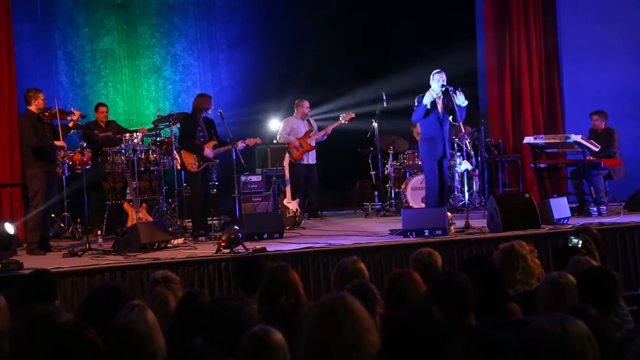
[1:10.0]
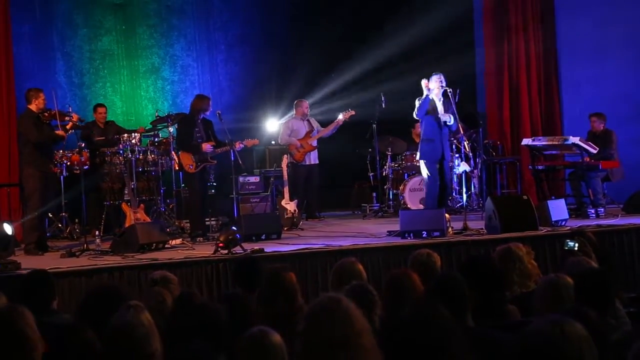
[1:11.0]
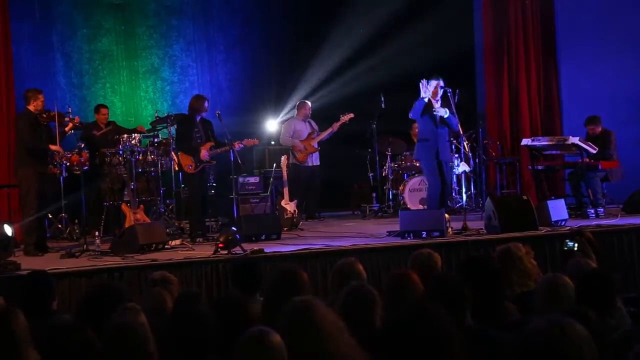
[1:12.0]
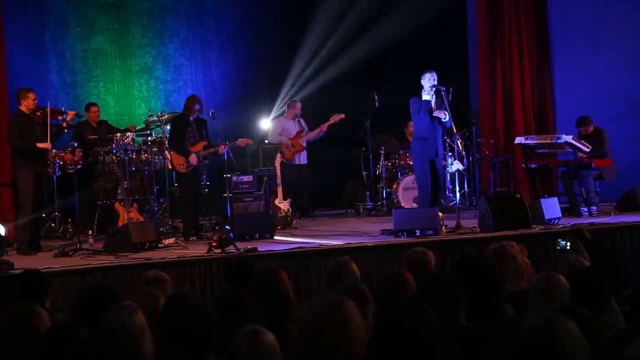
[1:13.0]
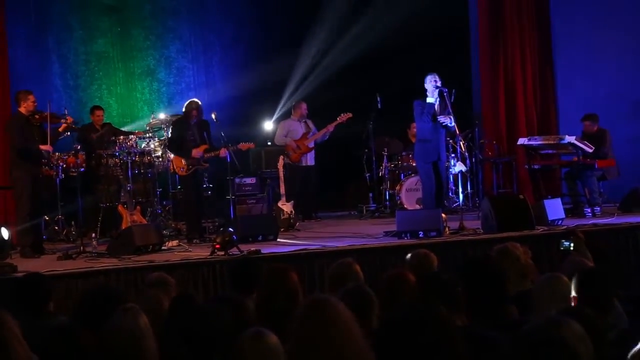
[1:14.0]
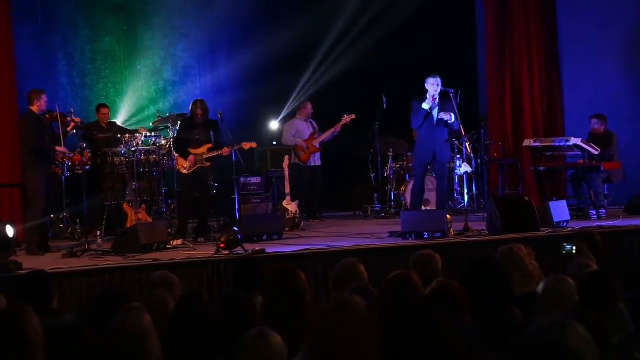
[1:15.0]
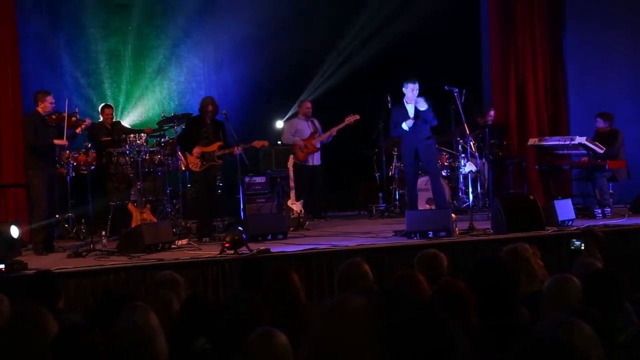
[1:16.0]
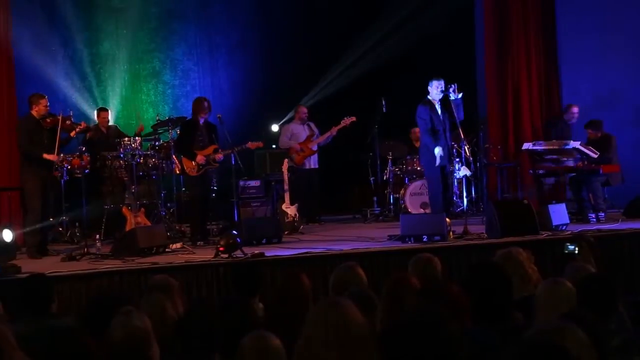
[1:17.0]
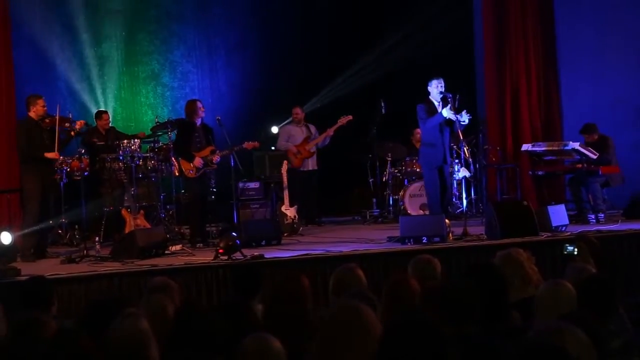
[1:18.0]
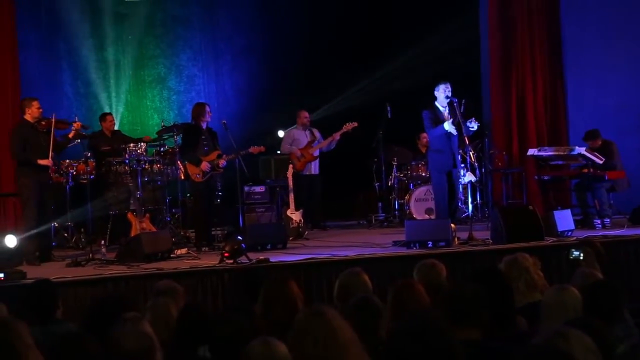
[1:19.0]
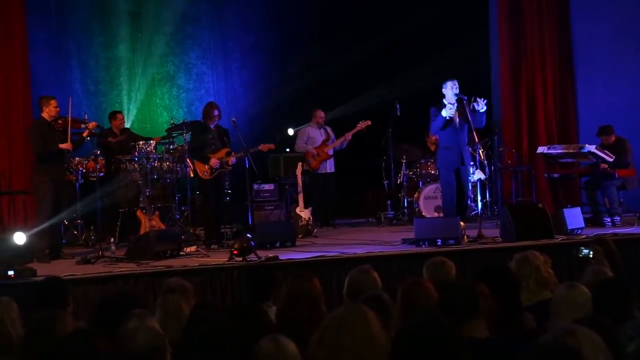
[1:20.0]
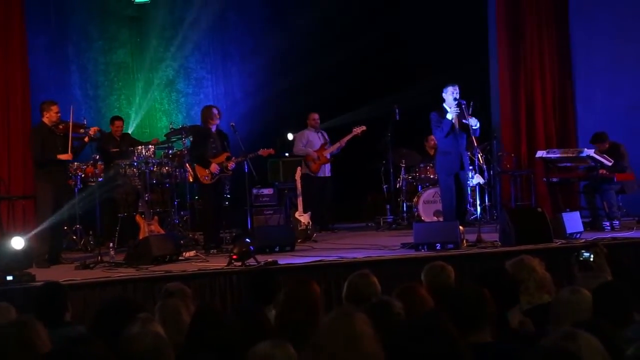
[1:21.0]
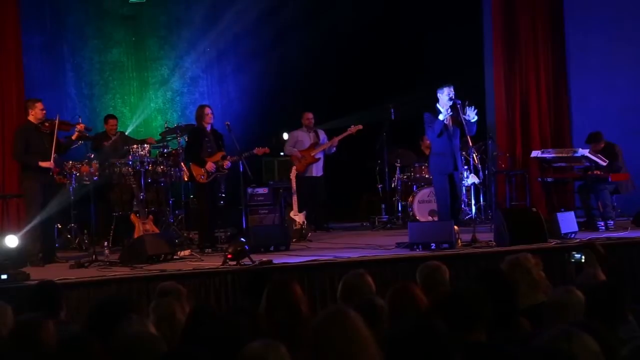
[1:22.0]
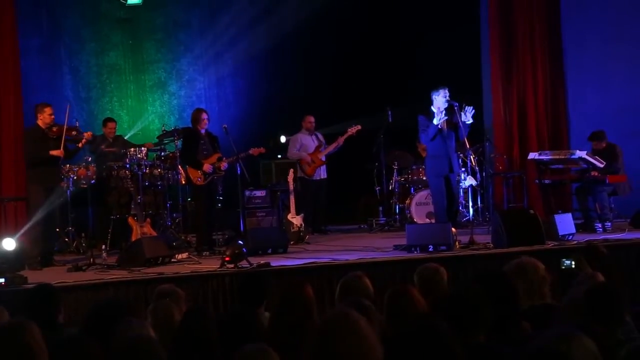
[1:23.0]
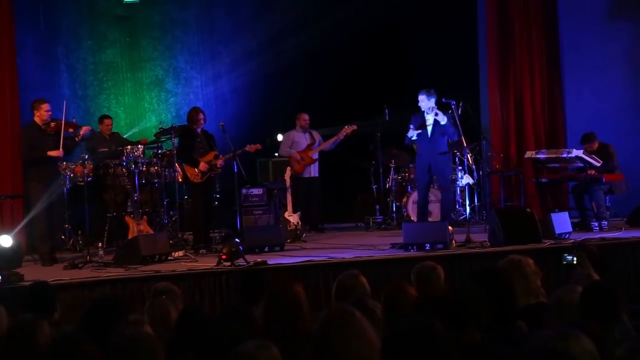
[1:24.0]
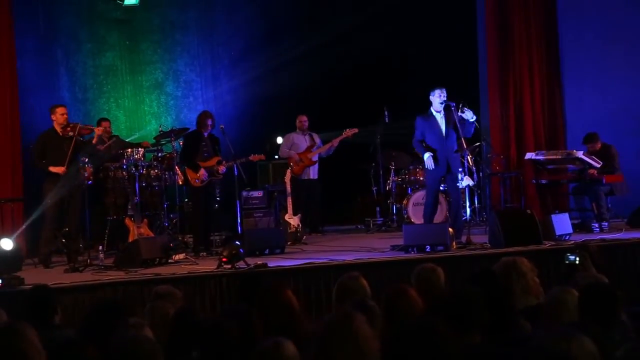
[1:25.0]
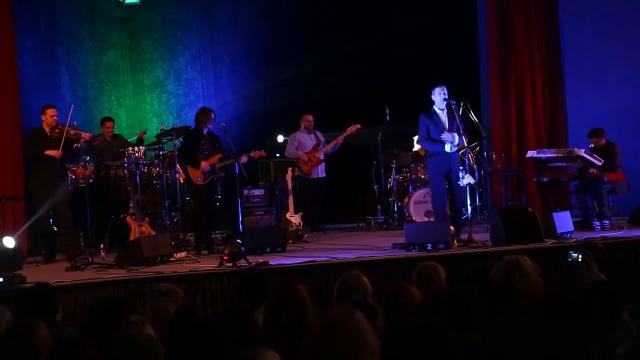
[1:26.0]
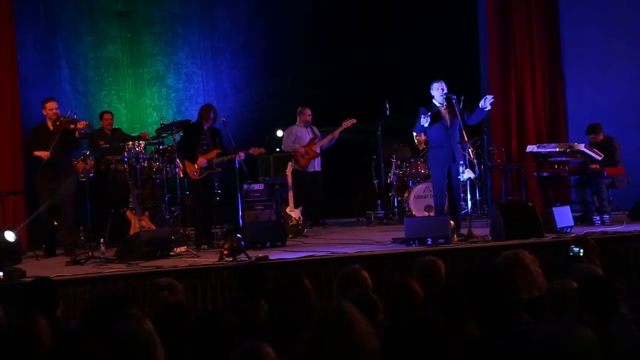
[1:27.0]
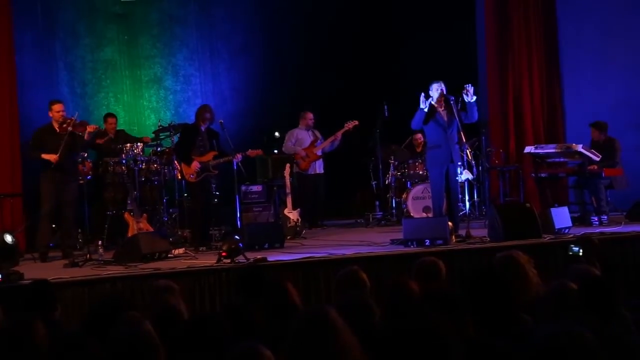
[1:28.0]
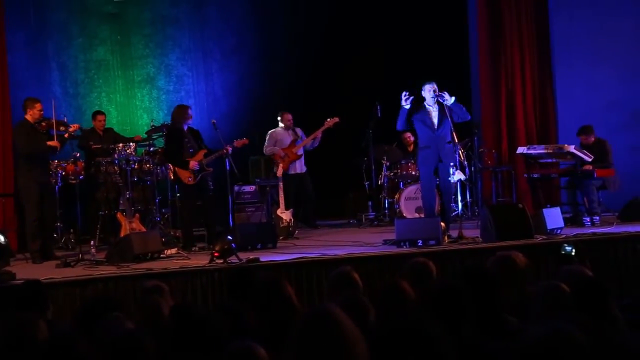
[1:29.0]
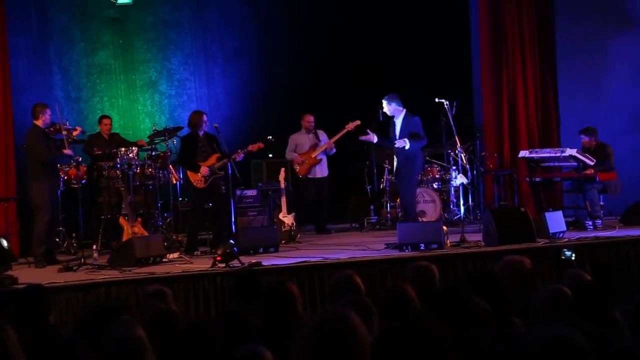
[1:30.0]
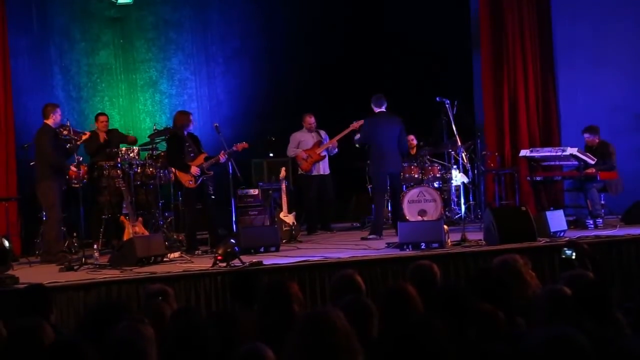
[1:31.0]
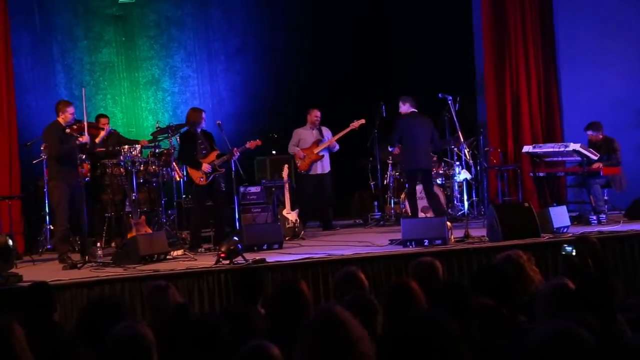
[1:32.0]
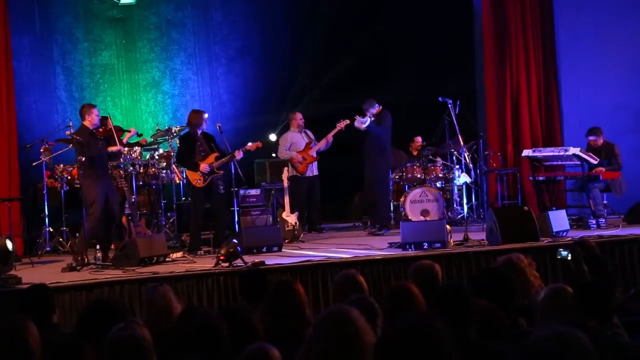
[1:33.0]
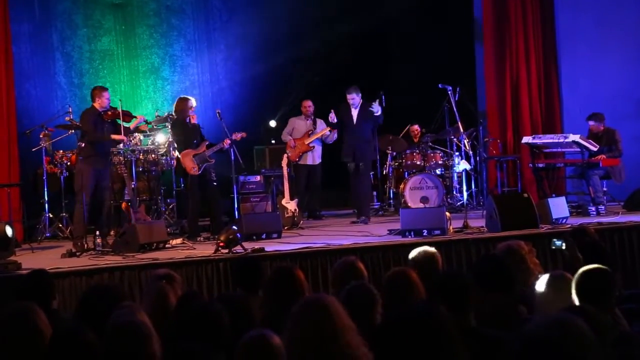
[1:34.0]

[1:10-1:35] The stage lights dim and the blue glow is gone, returning to a normal color range, a bit darker than before; the spotlights have changed focus. The singer stands in place, moving around a little within a small radius rather than going all over the stage. As he sings, he moves his hands around, especially around his face and chest. At one point he steps back to look at the band members behind him, then makes a gesture like he is playing the violin. The crowd is in the dark, with only the tops of their heads visible where the spotlight hits the backs of their heads.